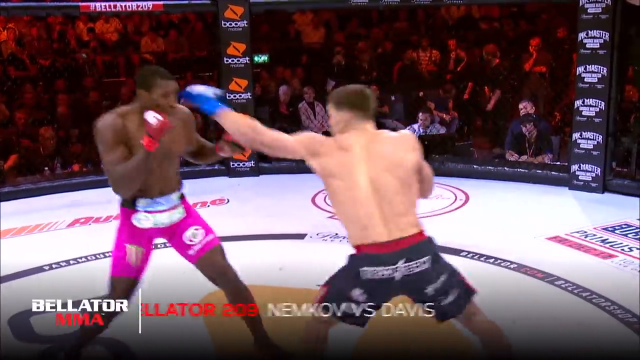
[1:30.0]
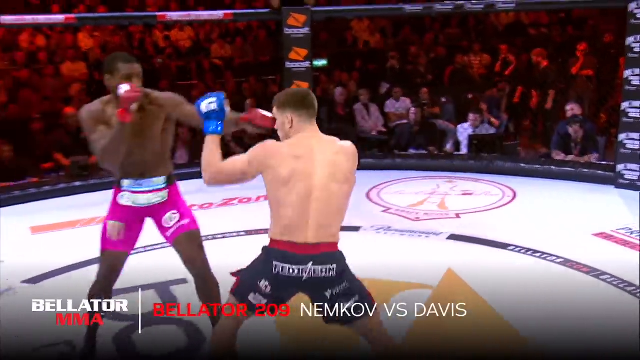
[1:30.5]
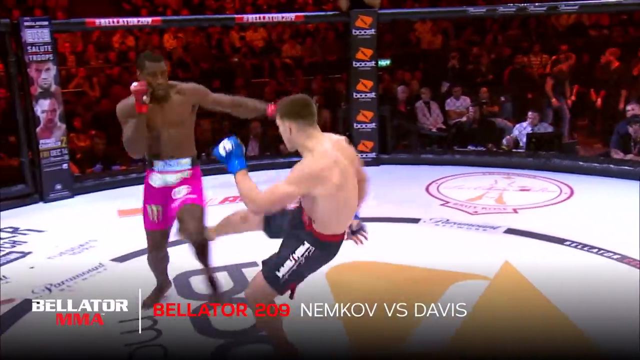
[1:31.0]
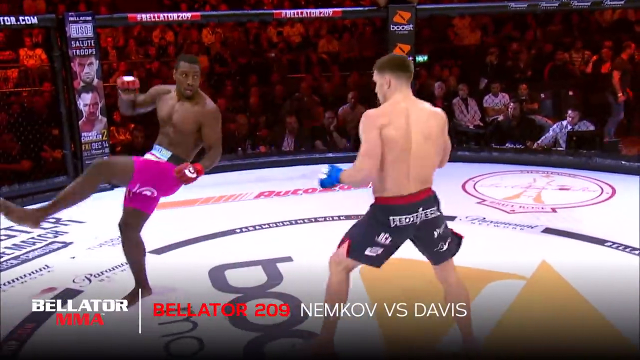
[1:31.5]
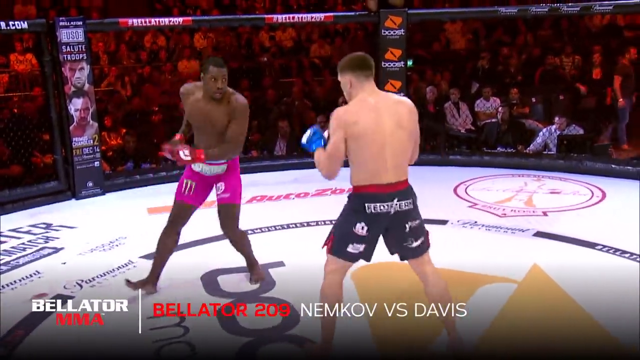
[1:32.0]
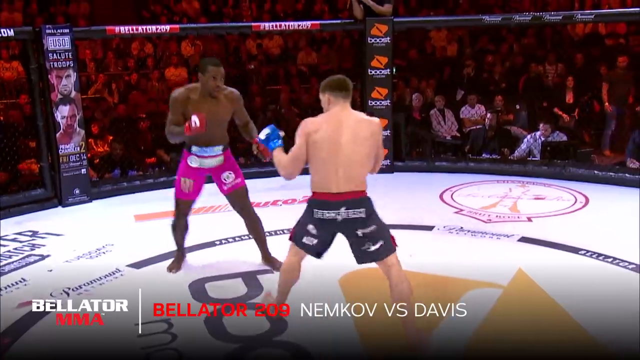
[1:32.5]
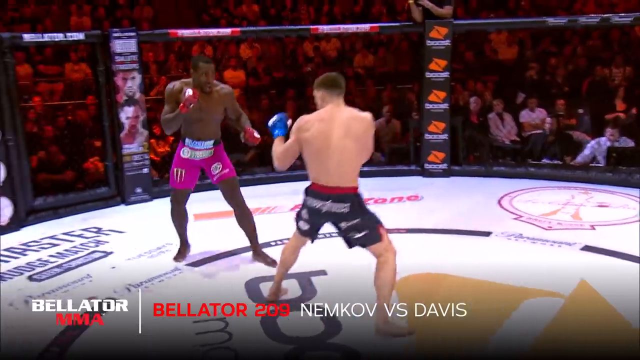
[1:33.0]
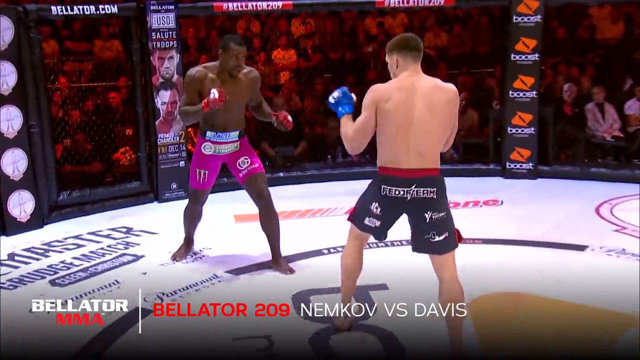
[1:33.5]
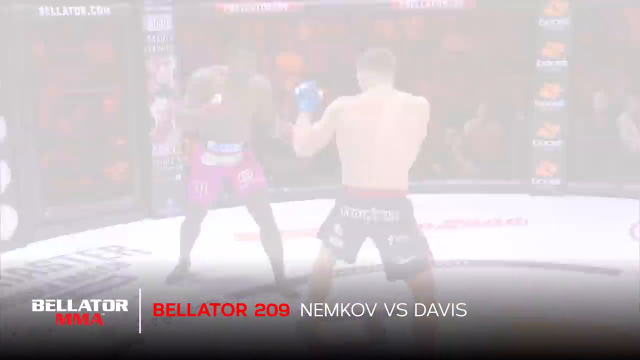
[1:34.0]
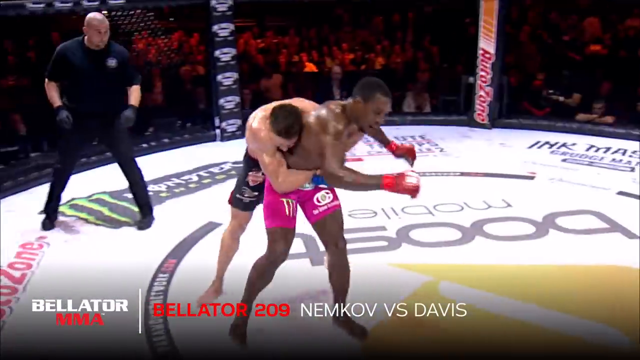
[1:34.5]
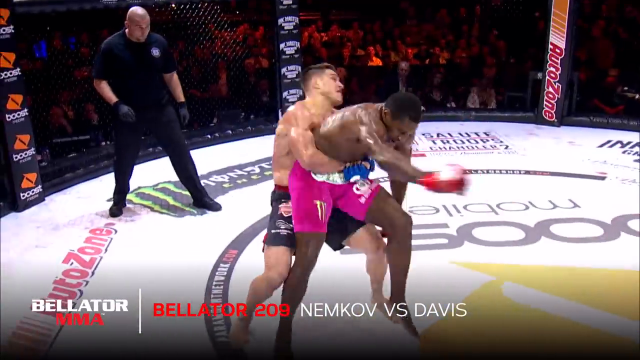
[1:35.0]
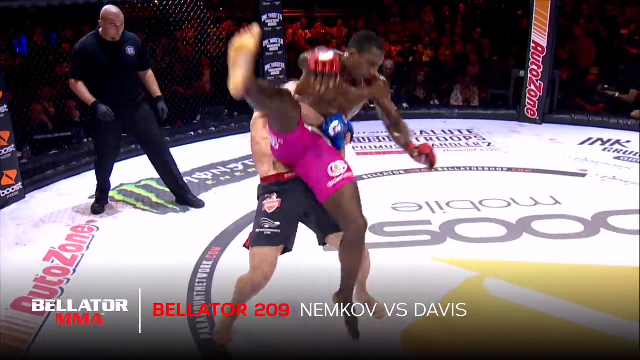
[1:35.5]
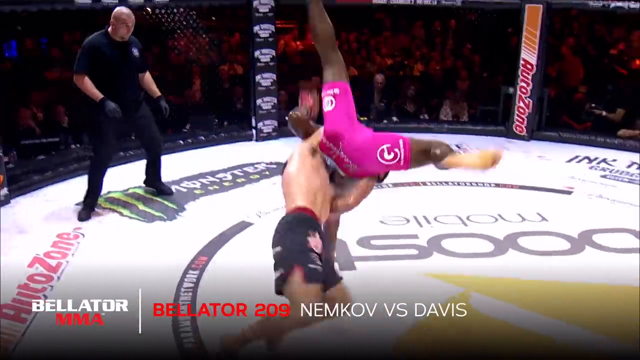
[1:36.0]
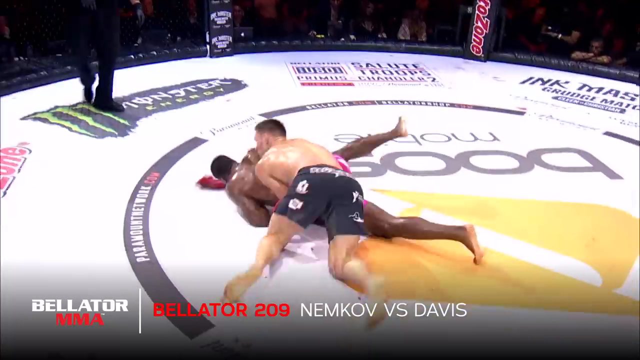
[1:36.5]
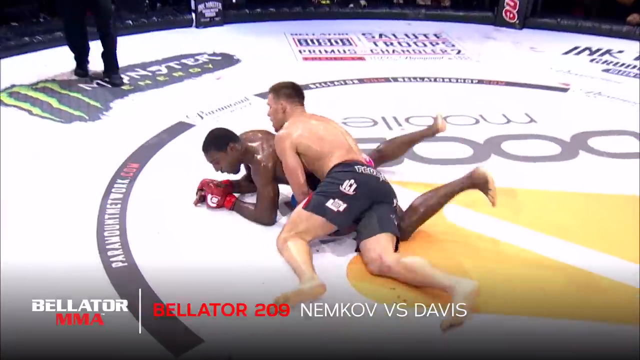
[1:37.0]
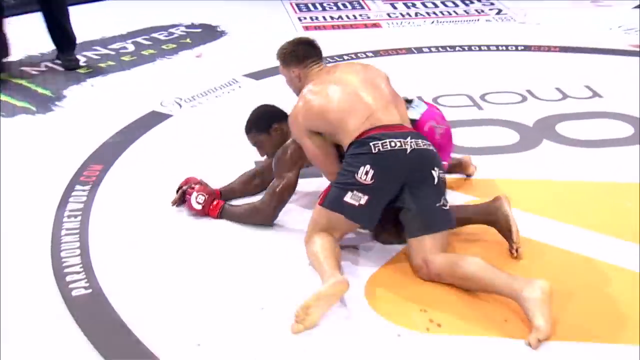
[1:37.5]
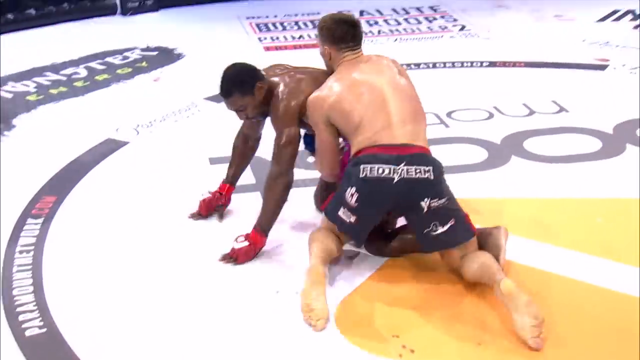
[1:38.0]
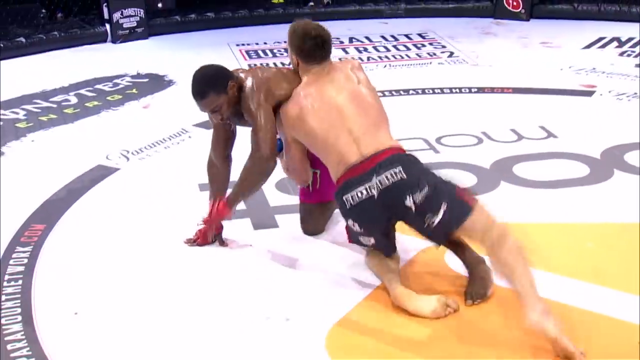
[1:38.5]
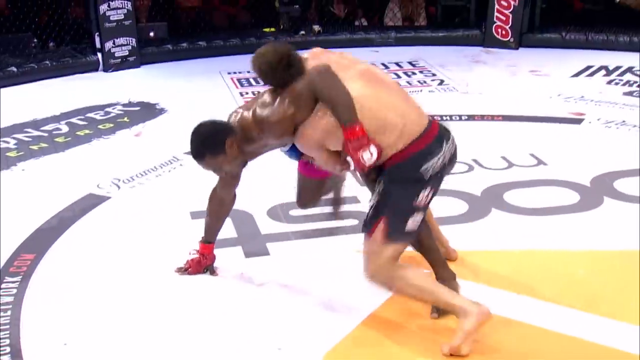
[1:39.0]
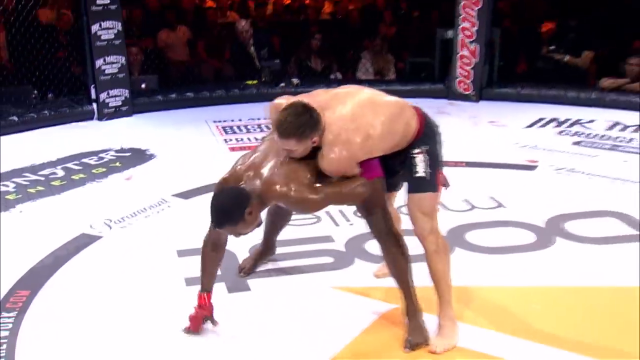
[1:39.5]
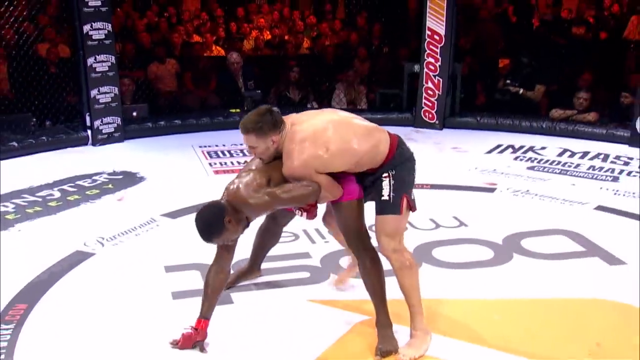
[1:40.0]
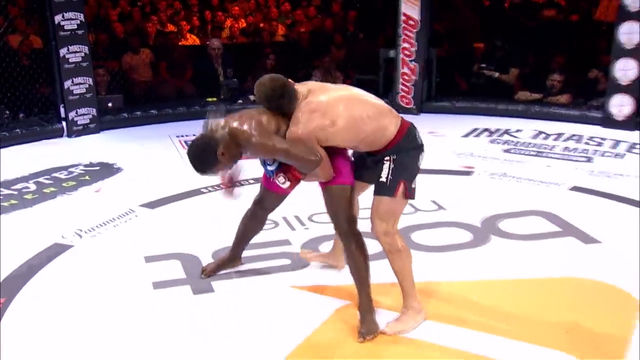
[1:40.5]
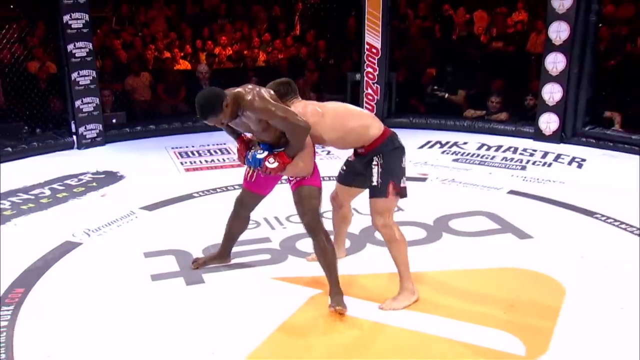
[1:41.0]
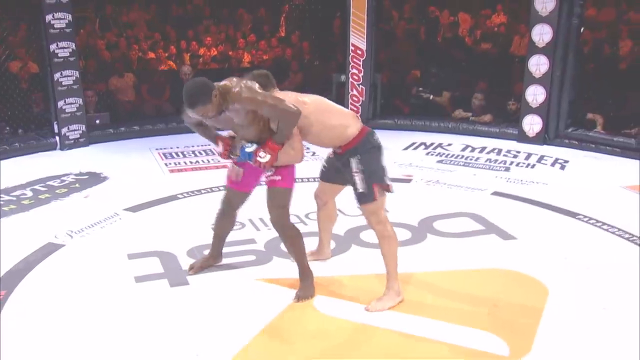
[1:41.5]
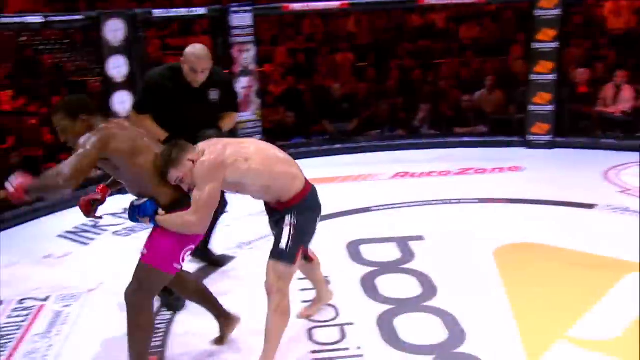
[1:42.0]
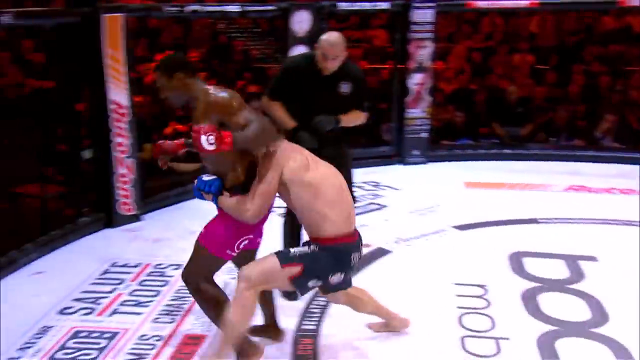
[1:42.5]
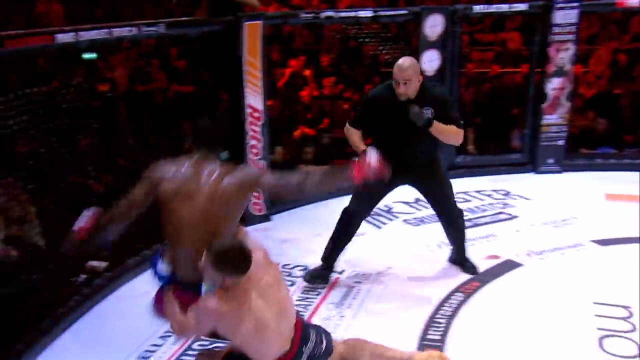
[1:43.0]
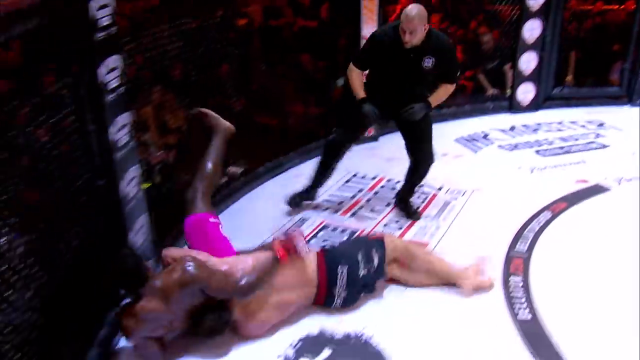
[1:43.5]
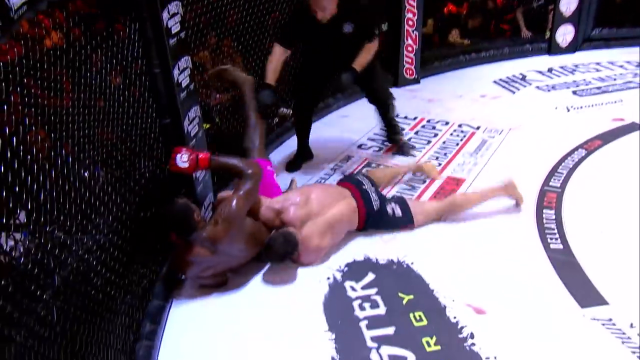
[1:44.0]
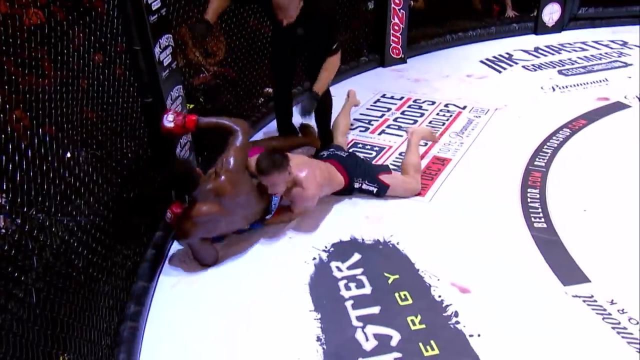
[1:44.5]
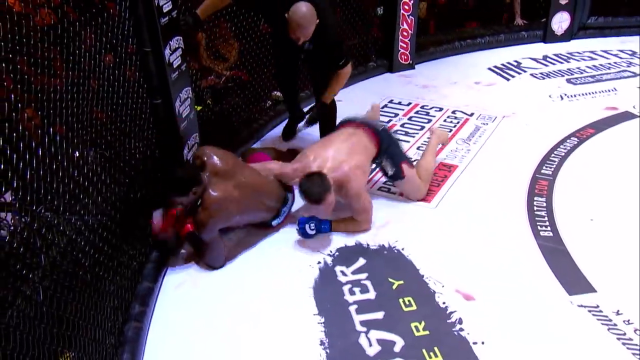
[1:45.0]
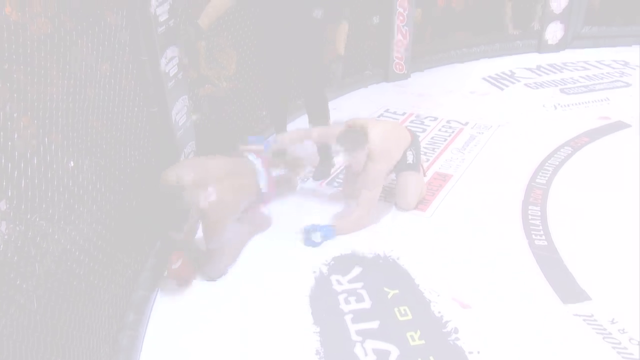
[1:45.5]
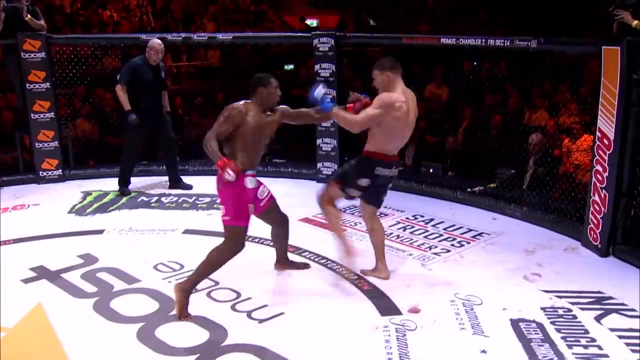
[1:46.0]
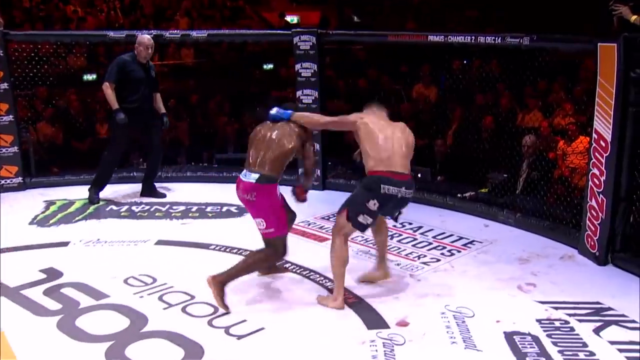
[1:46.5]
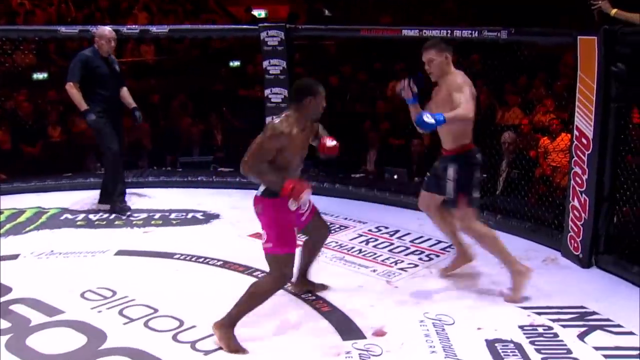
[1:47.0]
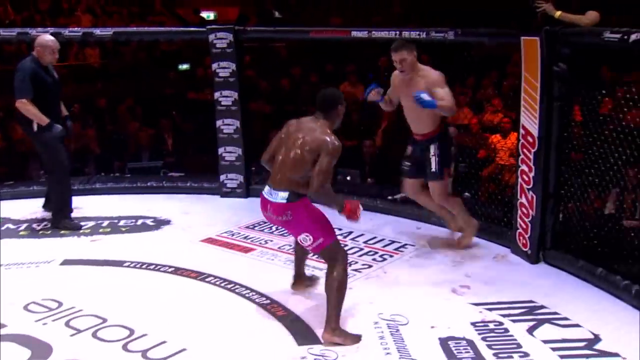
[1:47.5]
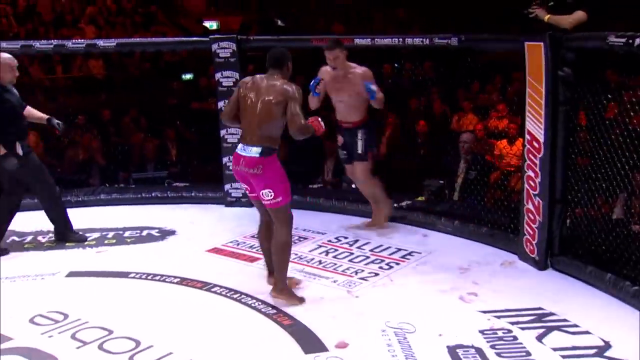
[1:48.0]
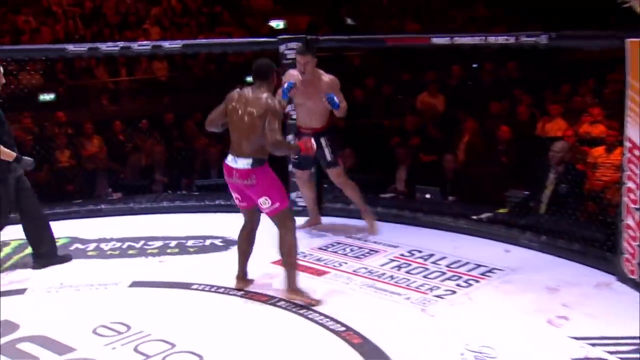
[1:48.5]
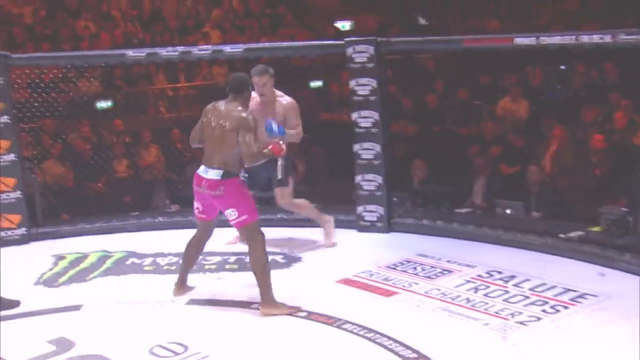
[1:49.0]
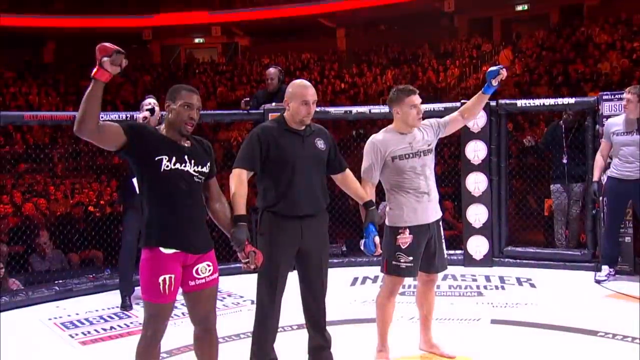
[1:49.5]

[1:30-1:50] The next fight is Nemkov versus Davis. Davis wears pink trunks and Nemkov wears black; one fighter has blue gloves and the other red. The fighters exchange strikes, and Davis is kicked in the leg. Nemkov suplexes Davis, picks him up off the ground again, tries to elbow him and slams him again. Nemkov is then hit with a right hook, and the two keep dancing around each other. Earlier, the referee breaks them up. Later the referee stands with the two fighters holding each of their arms, not yet announcing the winner, so the fight appears to have gone to the scorecards. Davis appears to have a slightly split lip at the end of the fight.